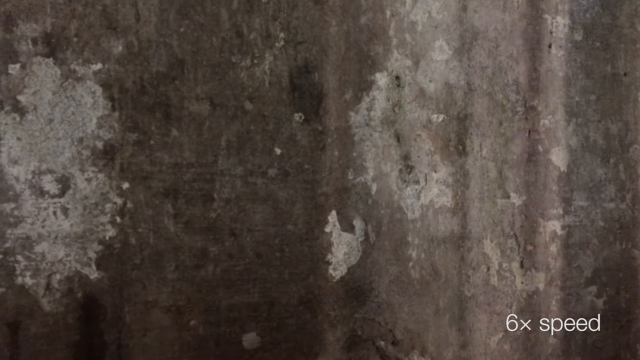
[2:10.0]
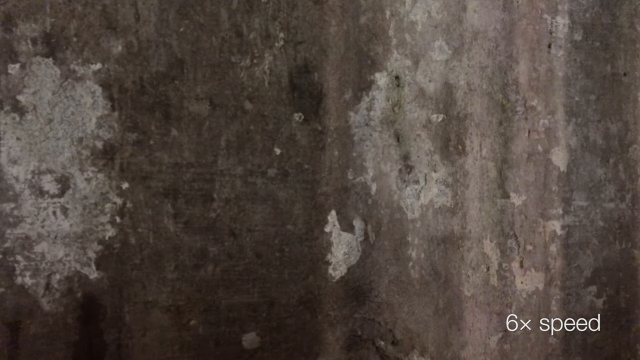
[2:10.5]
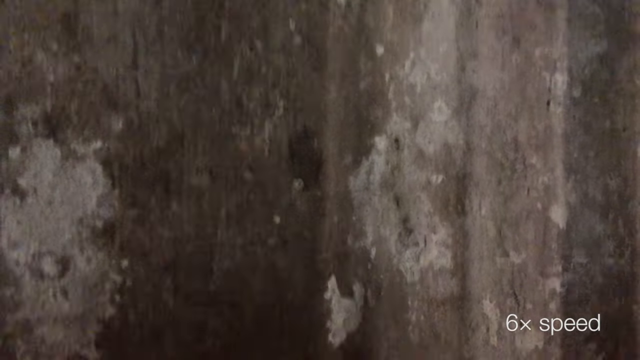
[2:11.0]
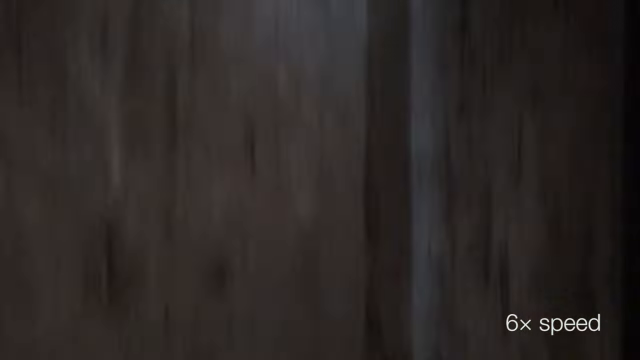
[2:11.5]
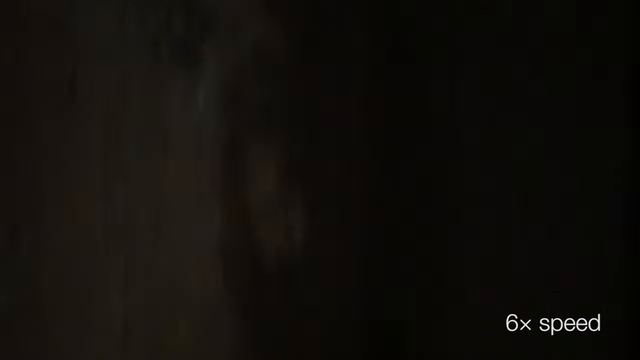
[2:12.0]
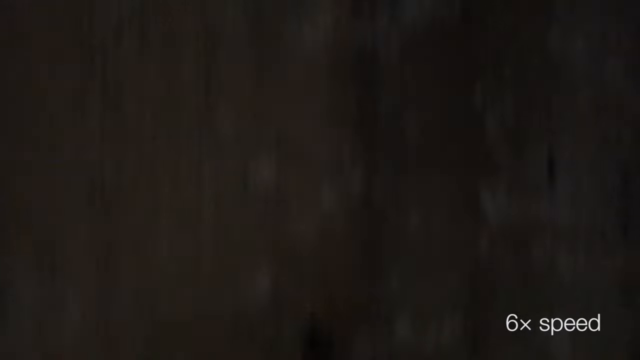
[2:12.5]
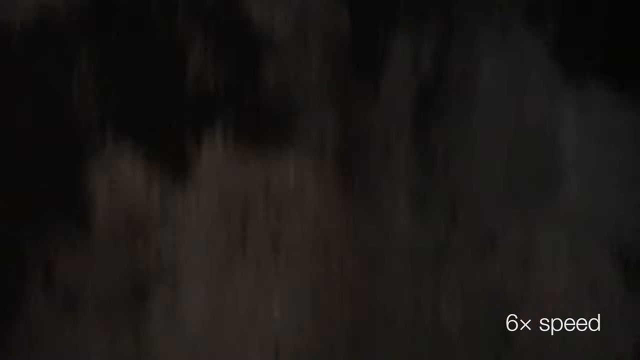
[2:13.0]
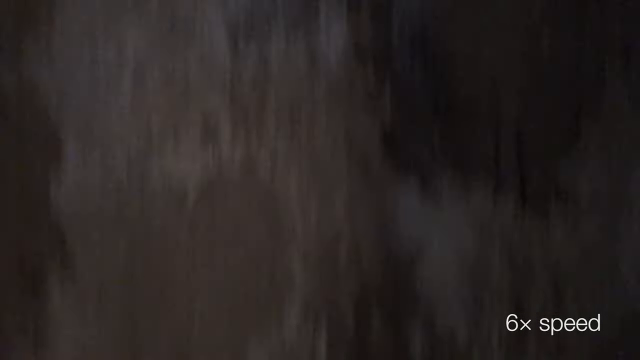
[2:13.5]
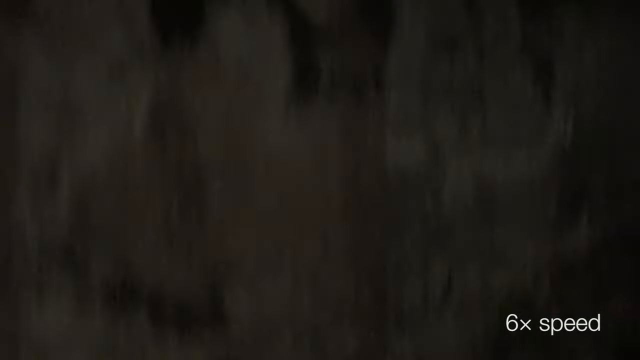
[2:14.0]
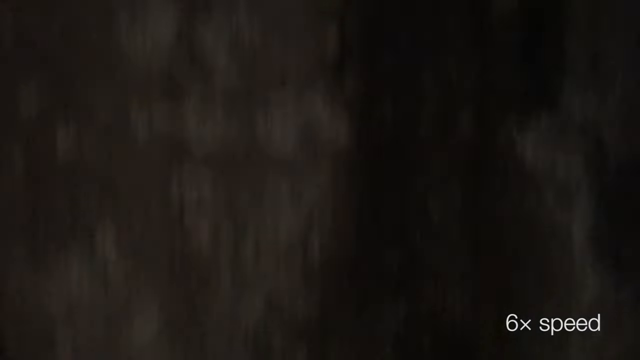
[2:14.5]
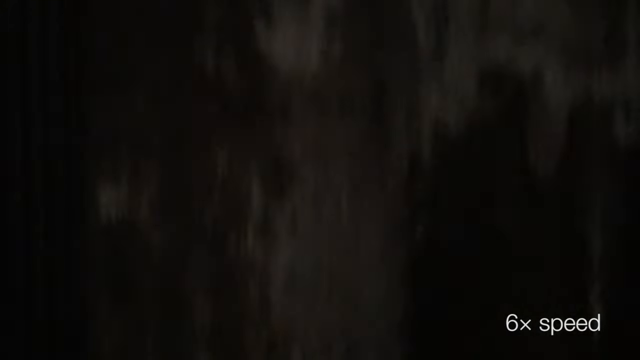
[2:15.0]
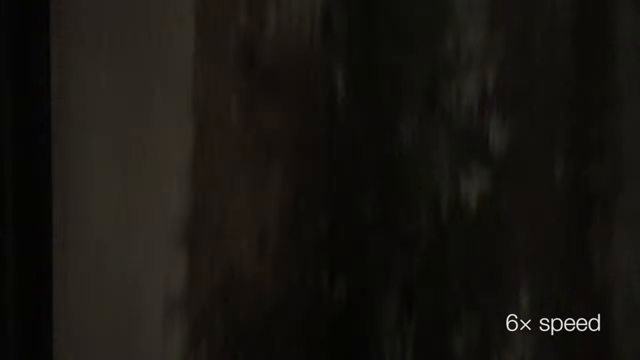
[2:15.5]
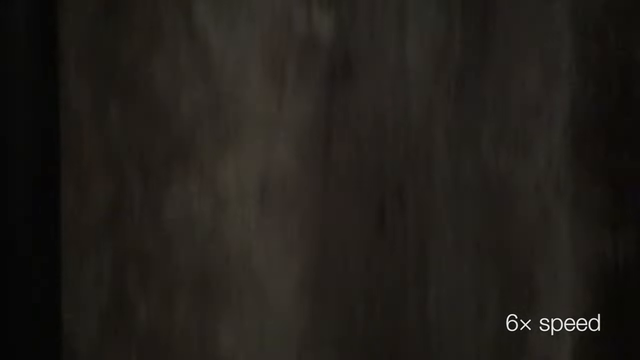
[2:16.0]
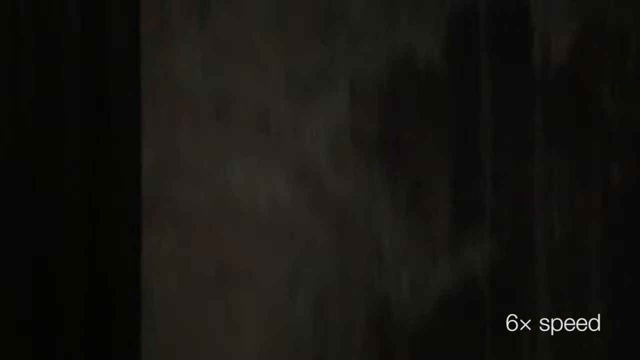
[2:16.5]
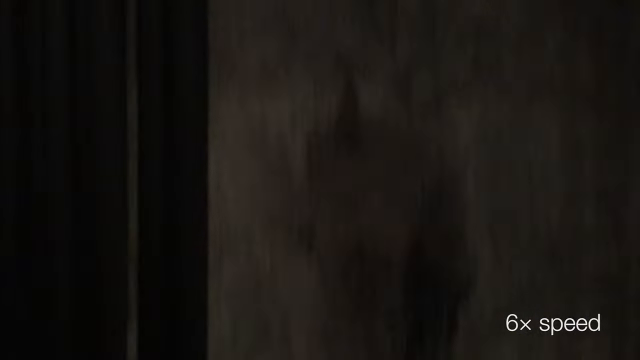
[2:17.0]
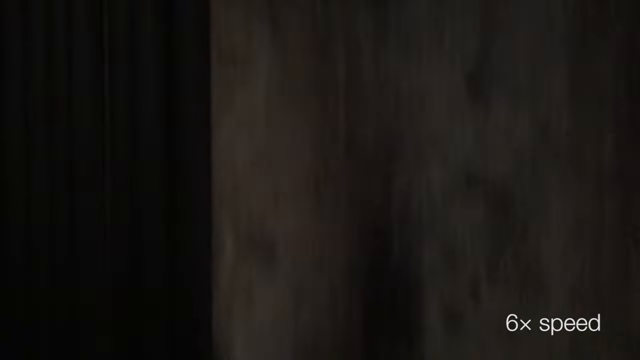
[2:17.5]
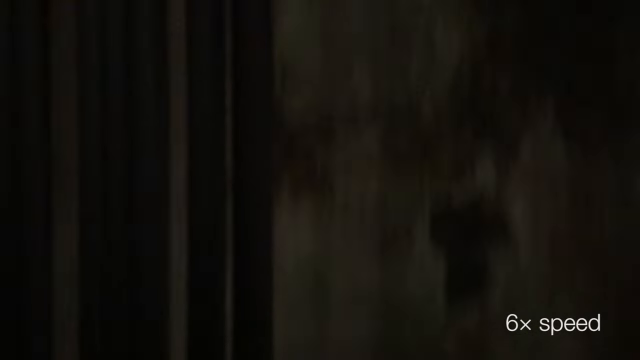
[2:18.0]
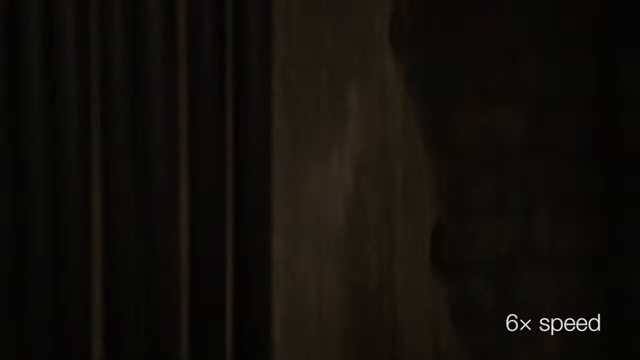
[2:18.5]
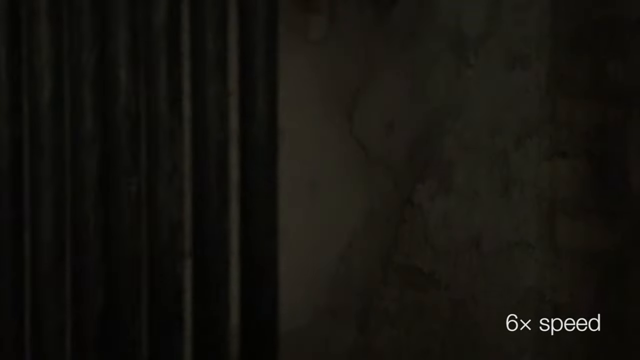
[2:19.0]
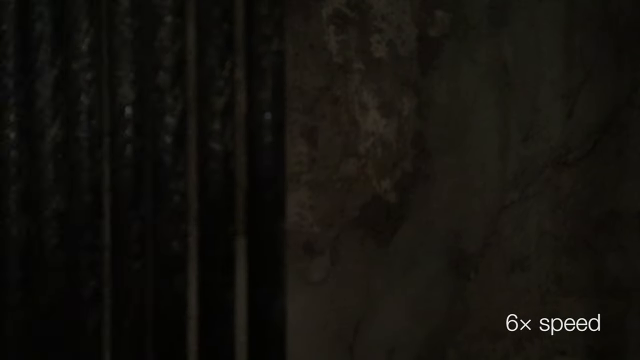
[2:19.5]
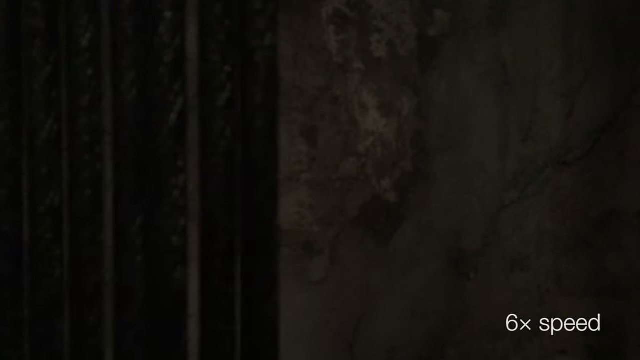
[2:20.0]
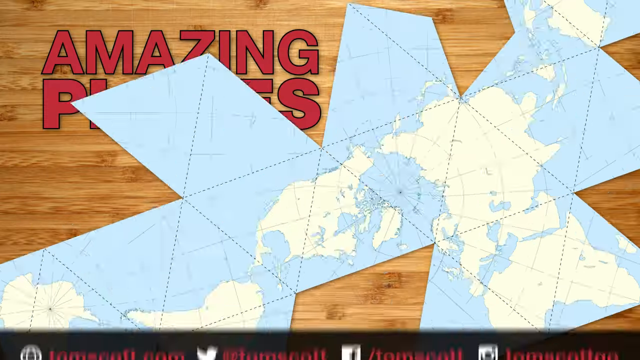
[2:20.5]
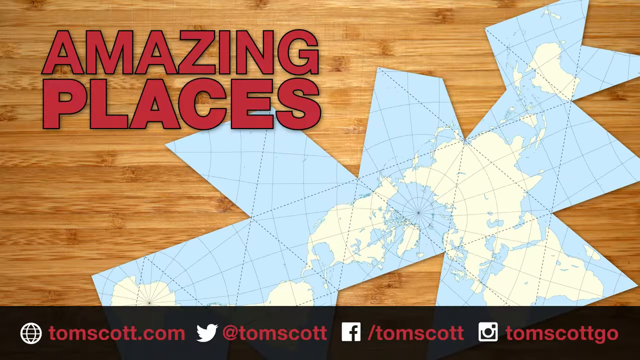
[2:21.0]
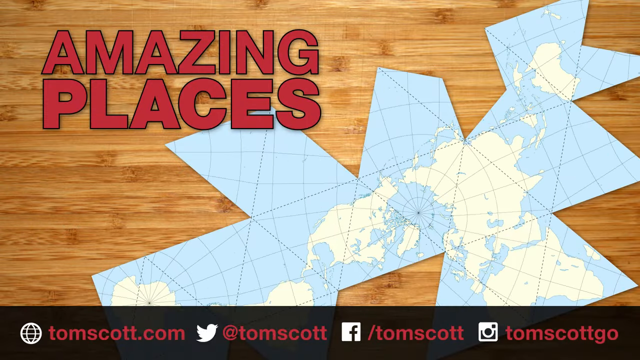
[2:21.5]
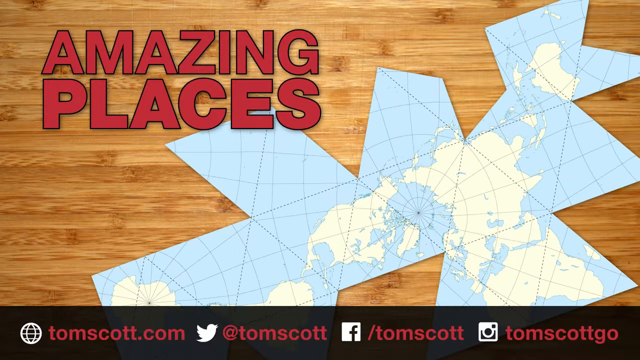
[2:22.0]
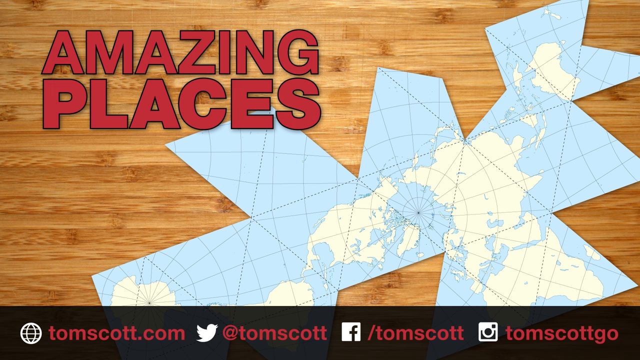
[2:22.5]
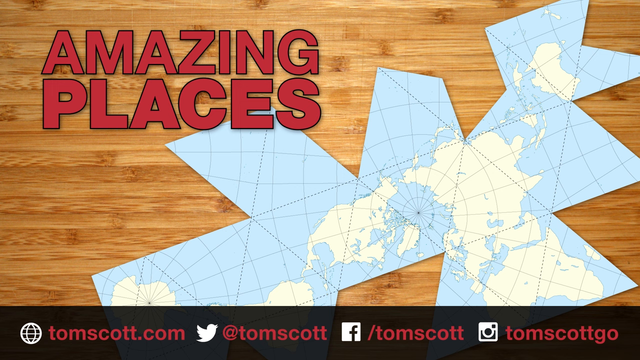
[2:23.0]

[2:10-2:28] At six times speed, the elevator goes up the shaft, with most of the shot showing the camera moving upwards. The reflection of the ropes shows along the wall, and many black ropes are visible on the right side. The video ends with an animated graphic reading "amazing places" in red at the top left of the screen, alongside what looks like a cutout of a world map cut into a triangular geometric shape with continents on it, perhaps viewed from the North Pole or sideways; at least seven are counted.